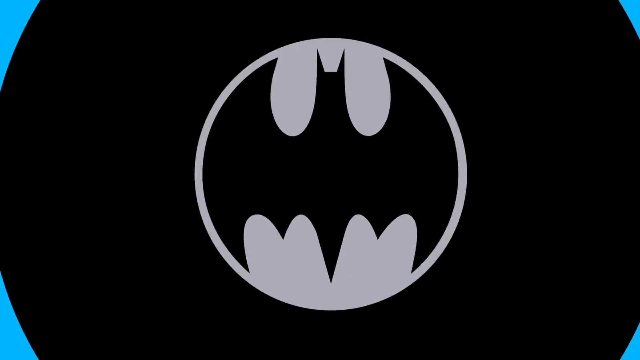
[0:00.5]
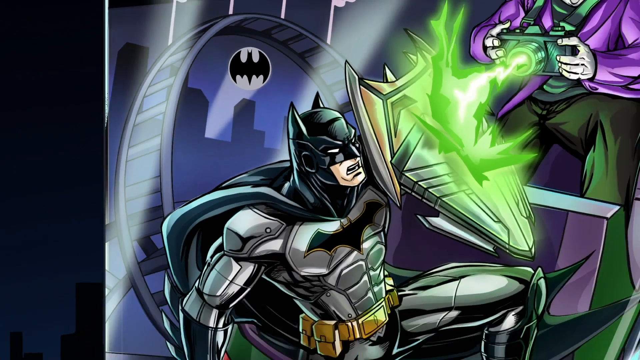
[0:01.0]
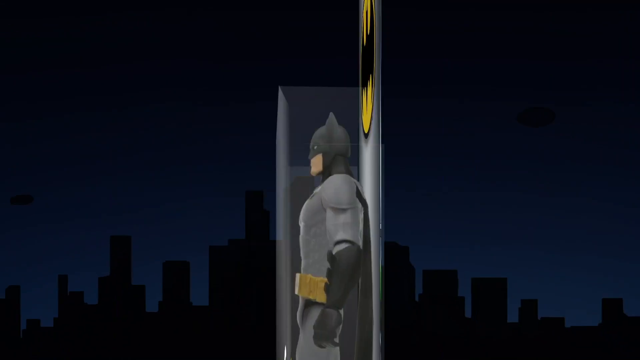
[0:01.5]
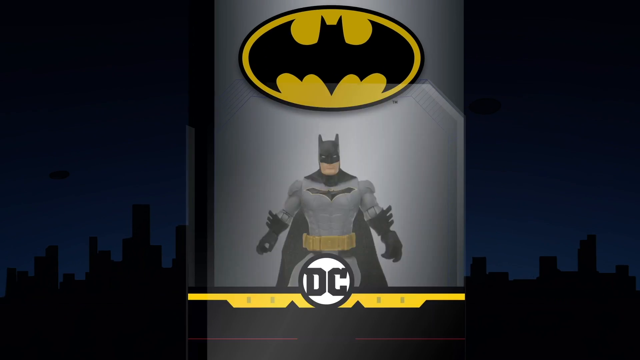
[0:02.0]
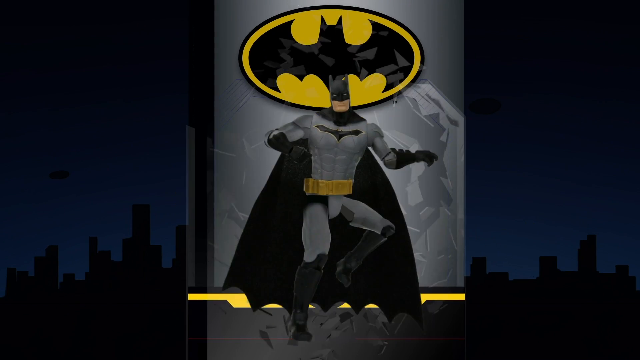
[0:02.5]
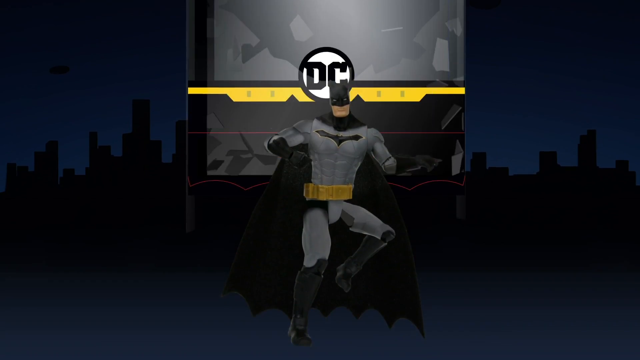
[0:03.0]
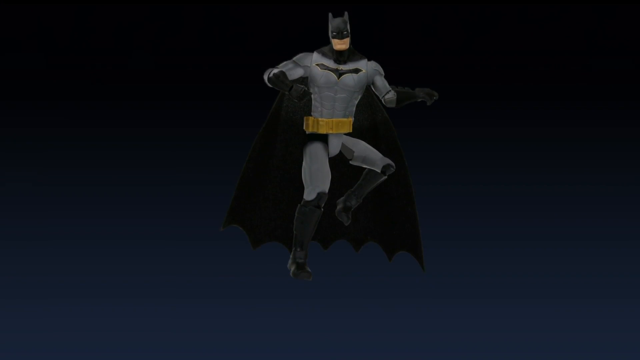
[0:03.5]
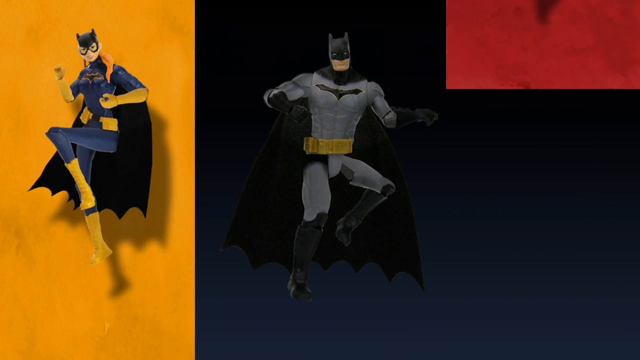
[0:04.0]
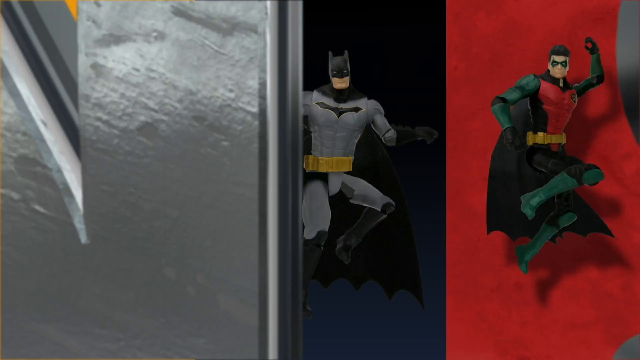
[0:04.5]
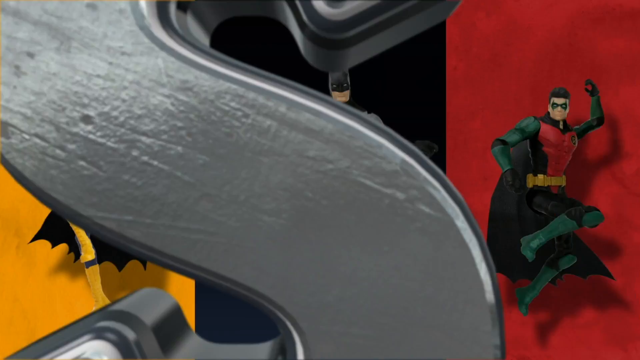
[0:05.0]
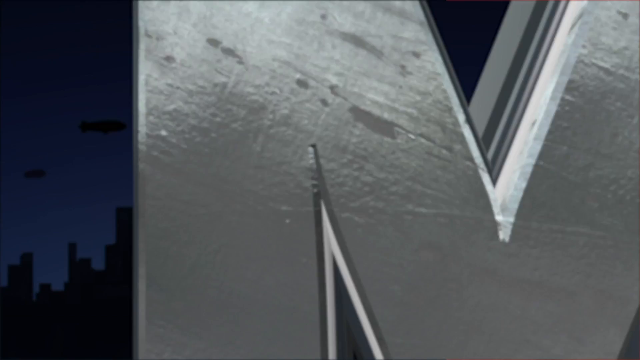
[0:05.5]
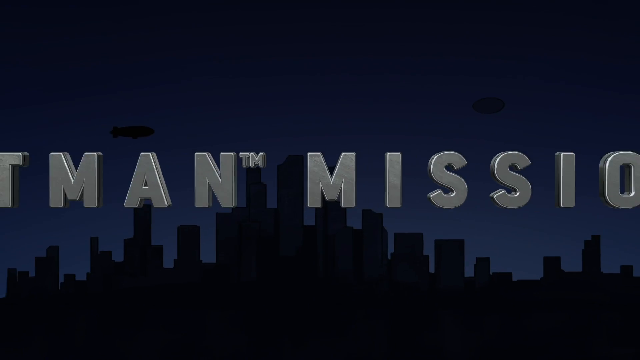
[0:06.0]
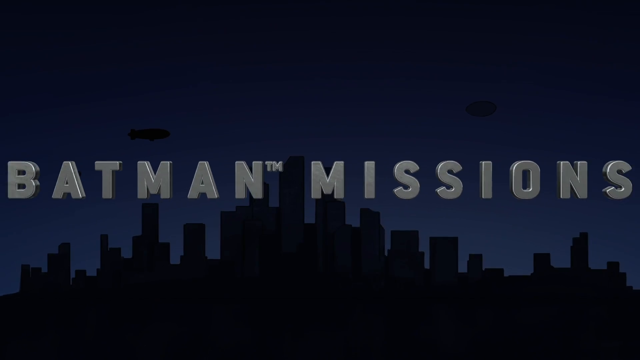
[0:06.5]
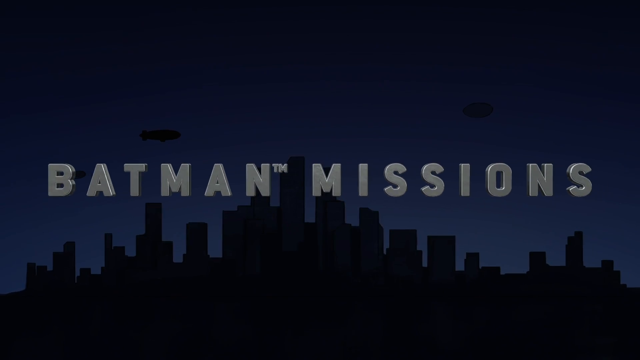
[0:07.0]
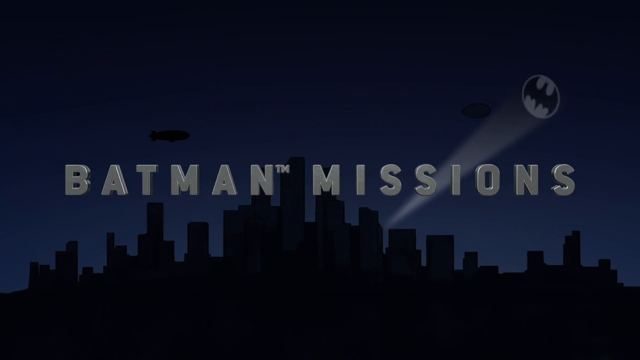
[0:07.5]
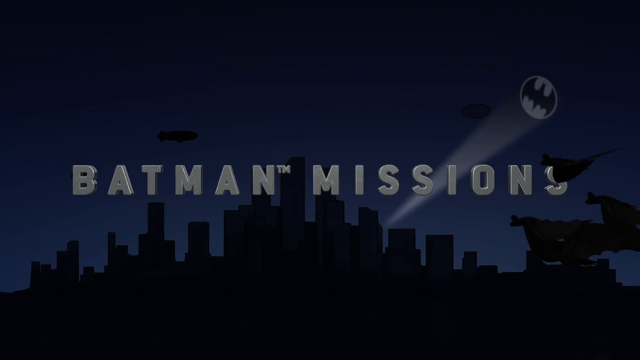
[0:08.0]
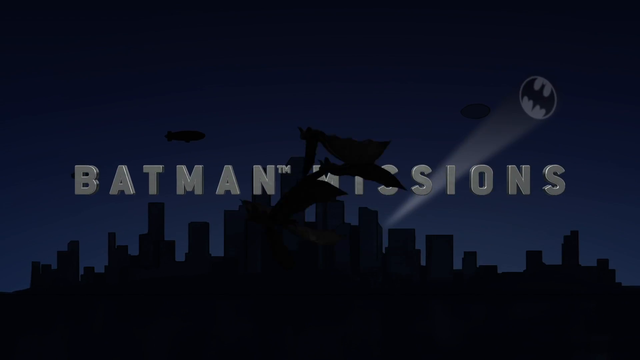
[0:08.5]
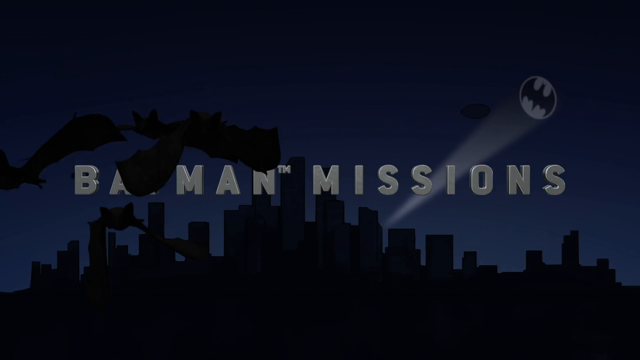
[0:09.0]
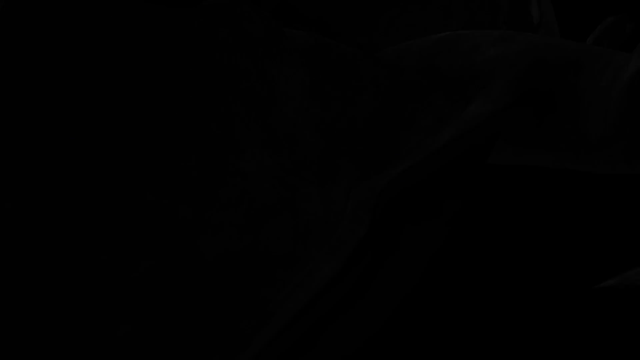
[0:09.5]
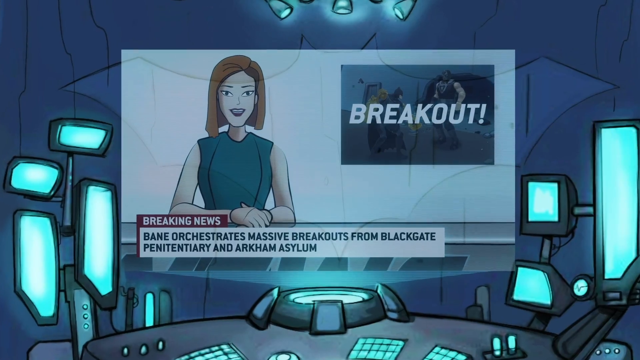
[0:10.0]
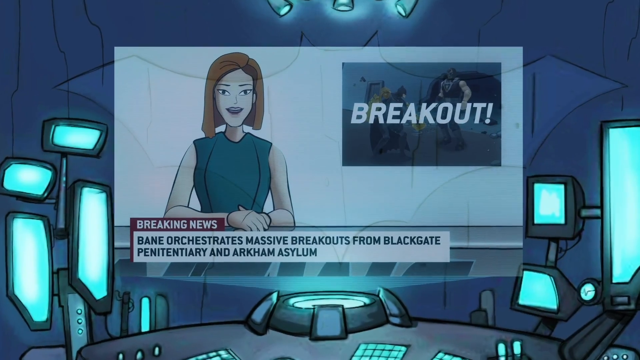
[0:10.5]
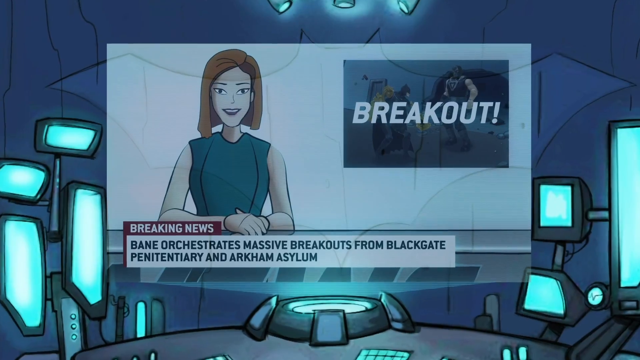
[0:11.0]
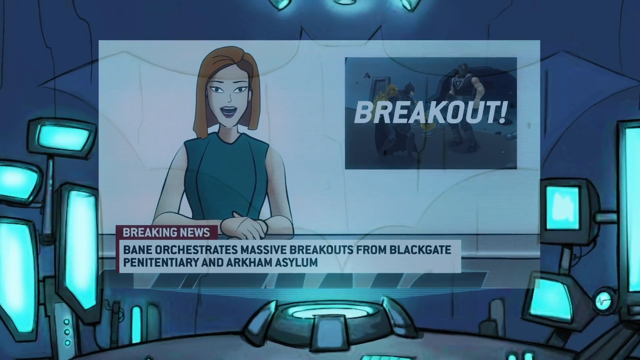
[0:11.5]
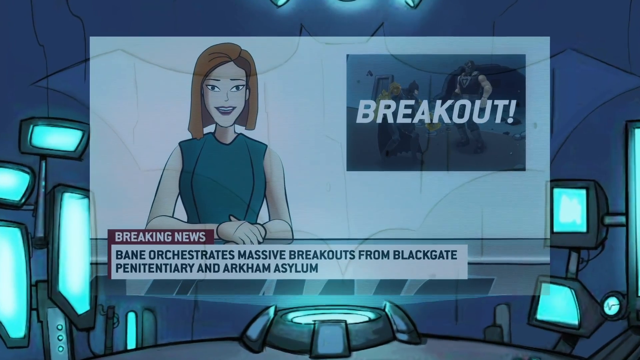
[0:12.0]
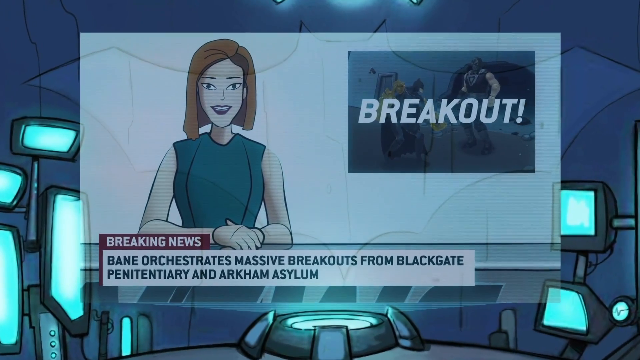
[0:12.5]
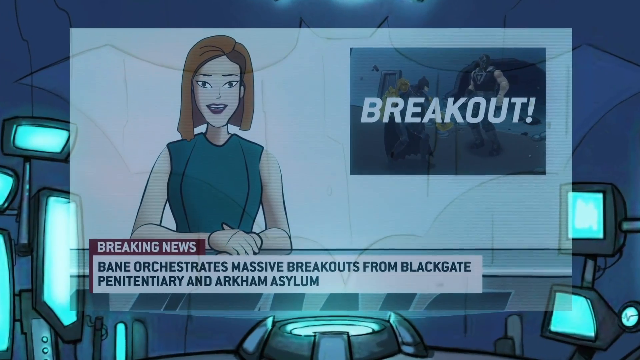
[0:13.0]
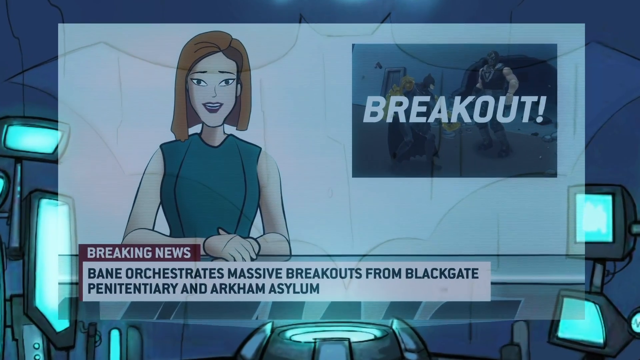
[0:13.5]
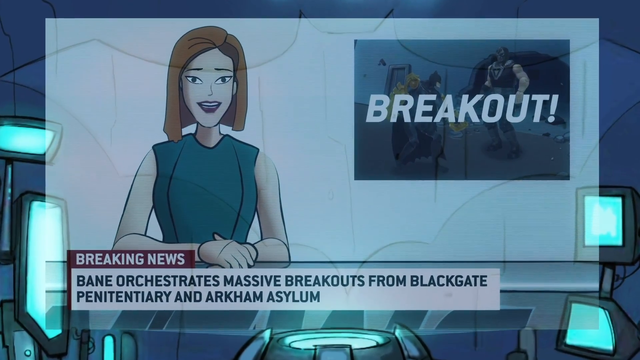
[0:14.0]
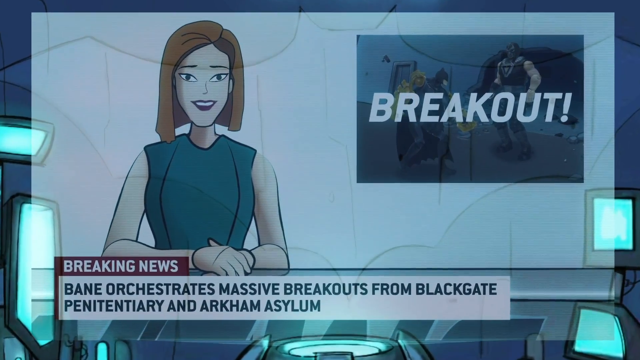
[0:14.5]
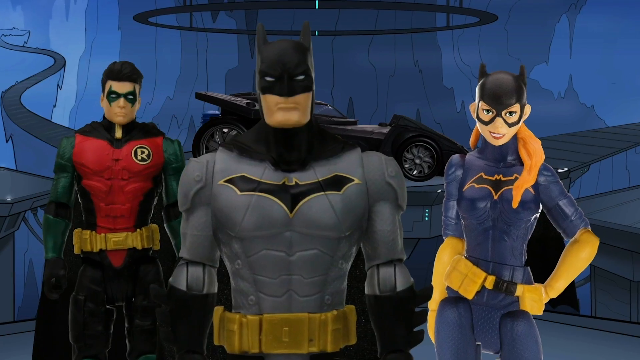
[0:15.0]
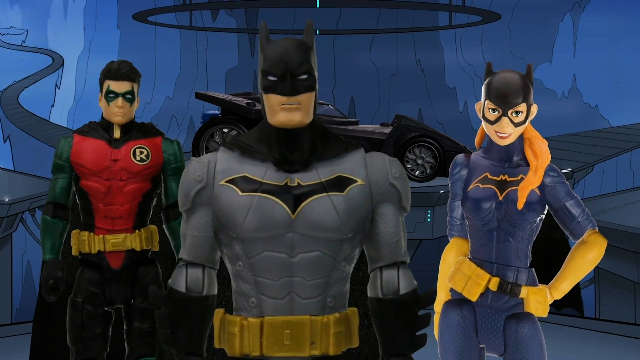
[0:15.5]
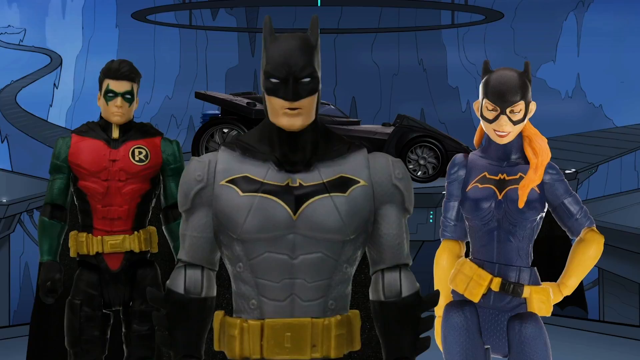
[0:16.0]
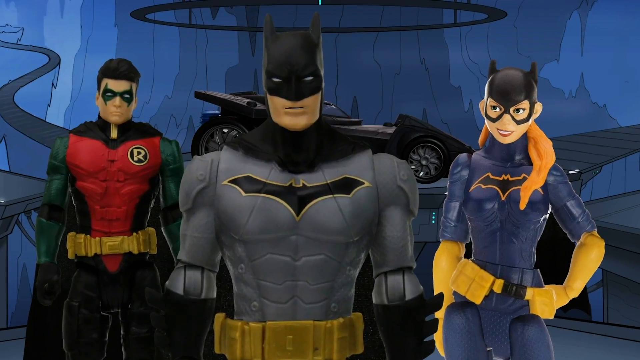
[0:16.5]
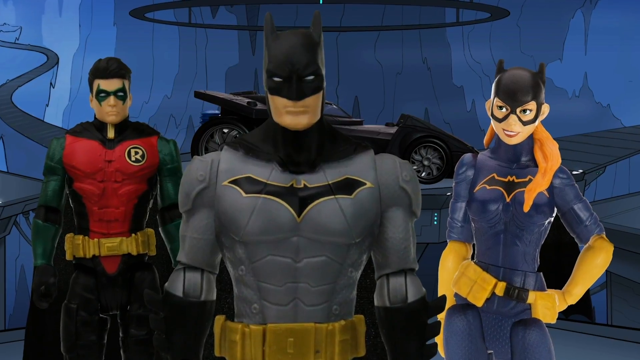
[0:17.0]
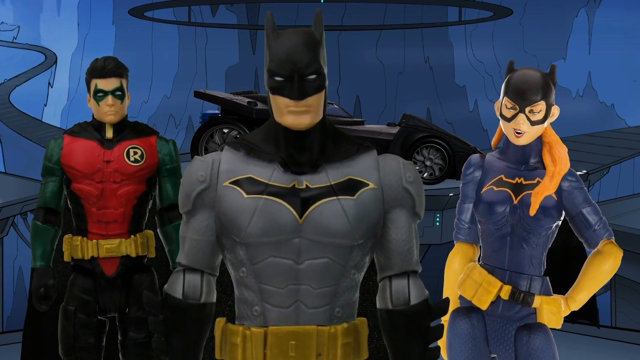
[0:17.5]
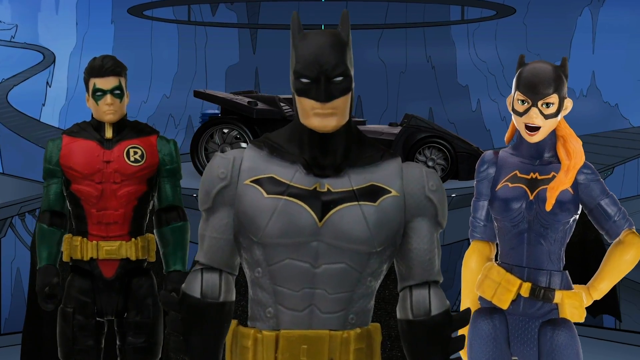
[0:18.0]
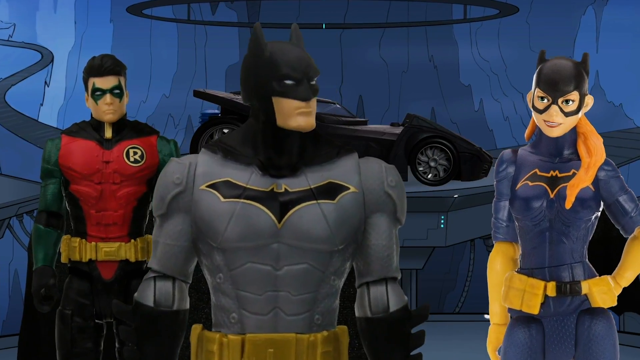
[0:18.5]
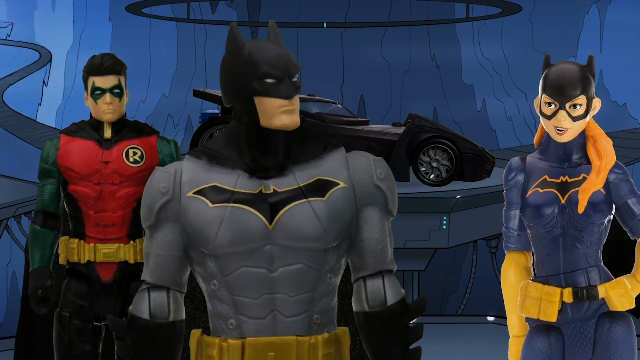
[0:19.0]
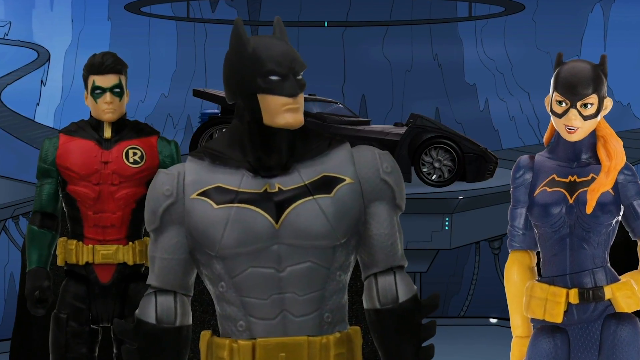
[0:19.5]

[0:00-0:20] A picture shows Batman blocking the Joker, who shoots electricity out of a camera on a roller coaster, with Robin and the Bat signal in the back of the picture. The picture flips over, and Batman jumps out of the holder of a toy. Batwoman, Batman and Robin then appear as action figures, and the text "Batman TM Missions" comes up. The Gotham City skyline follows; it is dark, and the Bat symbol sticks out in the sky. Some bats fly by and the scene transitions to a cartoon news scene with a newscaster, where text reads "Breaking News. Bane orchestrates massive breakout from Blackgate Penitentiary and Arkham Asylum." The scene then moves to the Batcave, where Batman, Robin and Batwoman appear as action figures with the Batmobile behind them. A mouse cursor is seen moving.